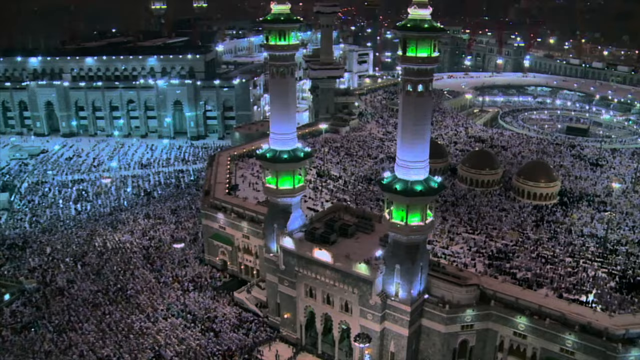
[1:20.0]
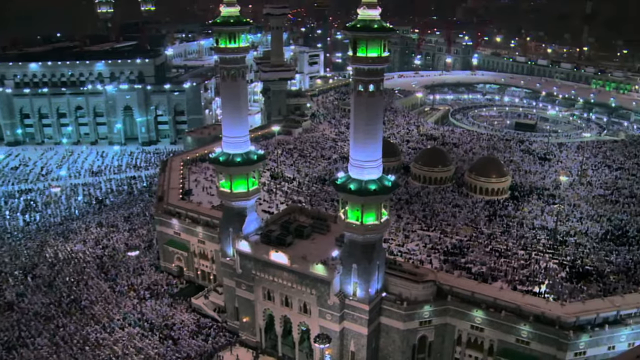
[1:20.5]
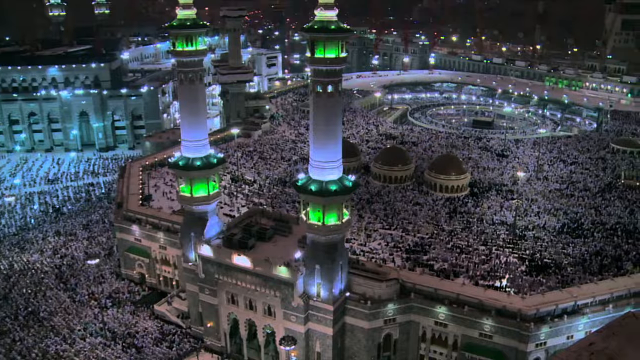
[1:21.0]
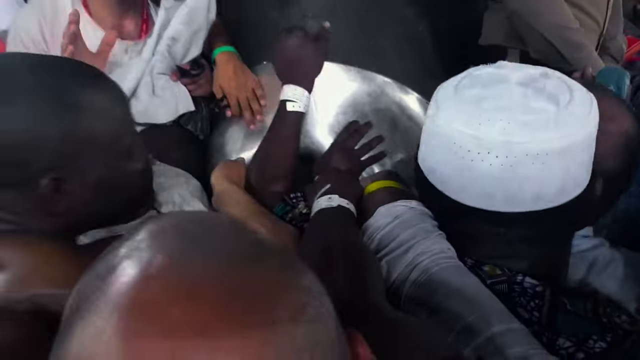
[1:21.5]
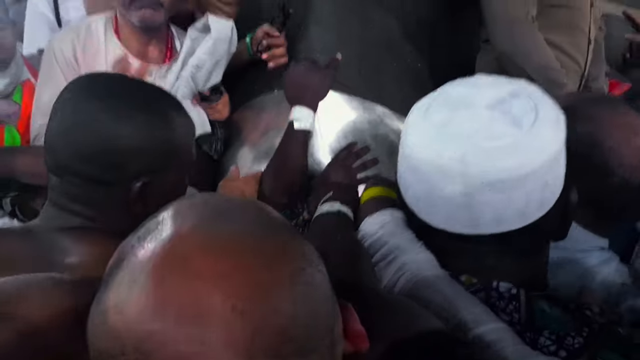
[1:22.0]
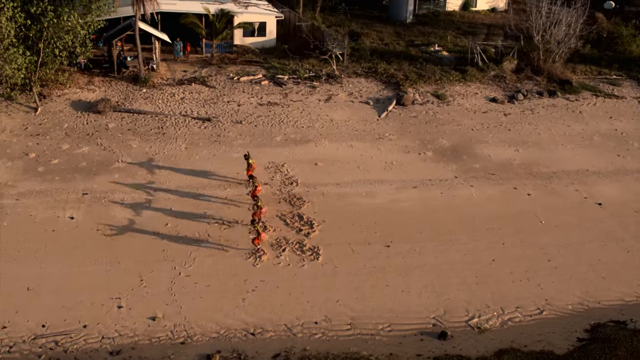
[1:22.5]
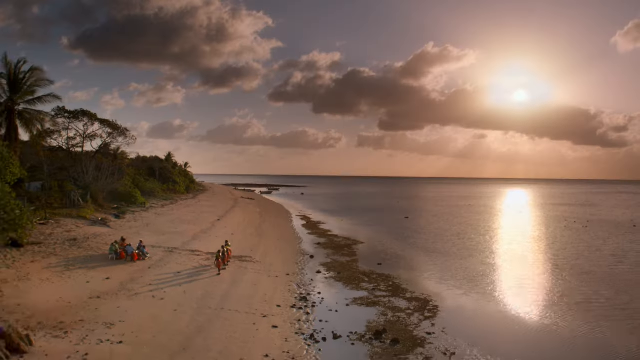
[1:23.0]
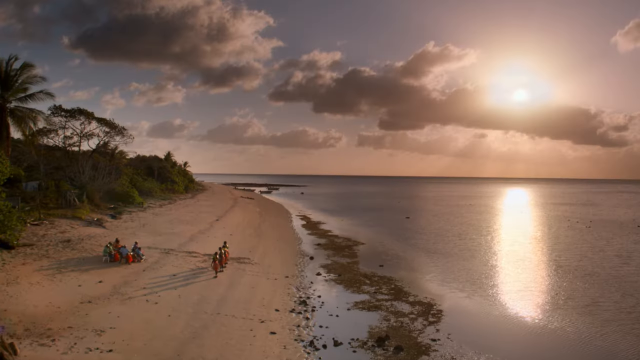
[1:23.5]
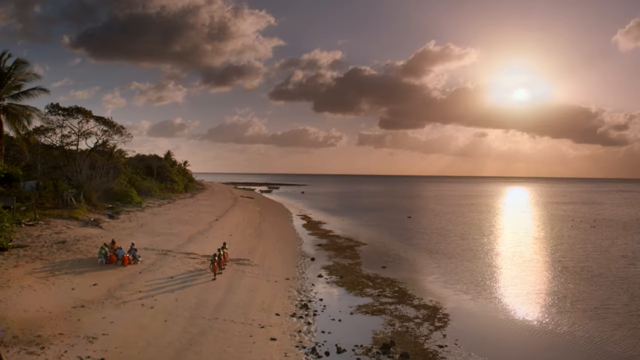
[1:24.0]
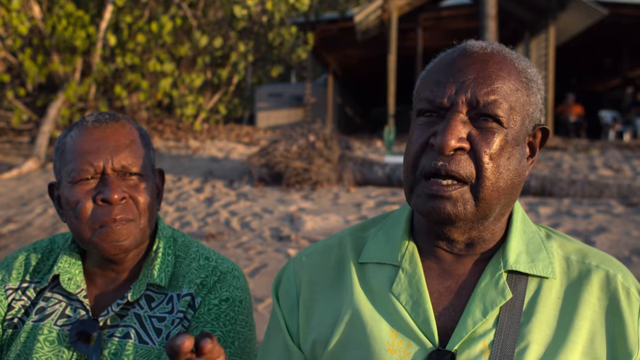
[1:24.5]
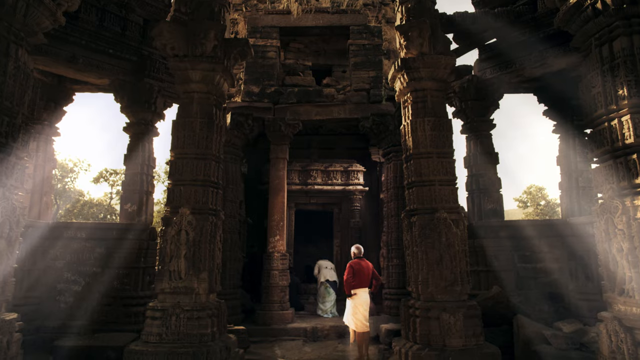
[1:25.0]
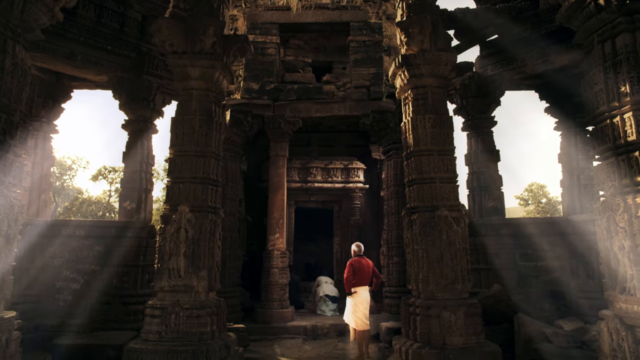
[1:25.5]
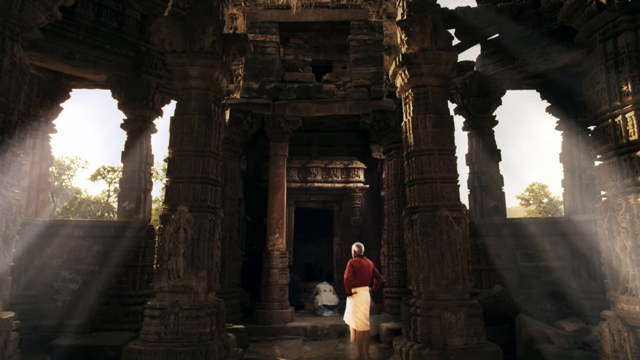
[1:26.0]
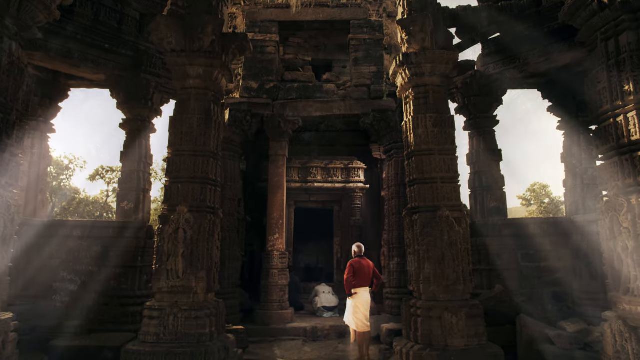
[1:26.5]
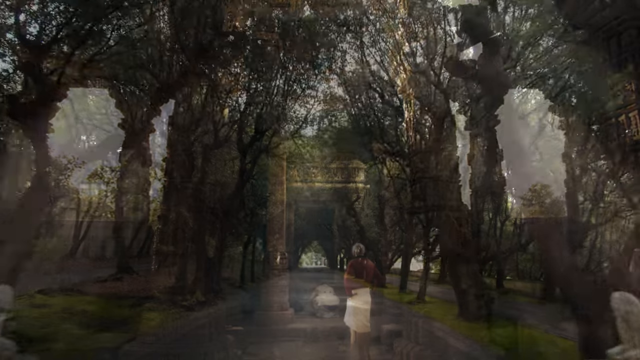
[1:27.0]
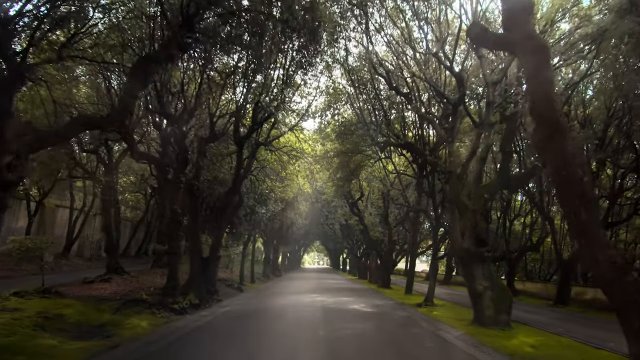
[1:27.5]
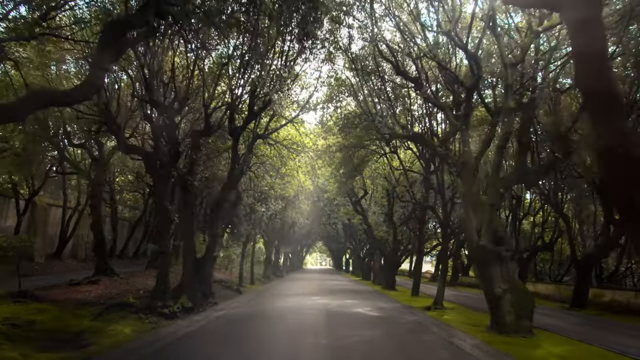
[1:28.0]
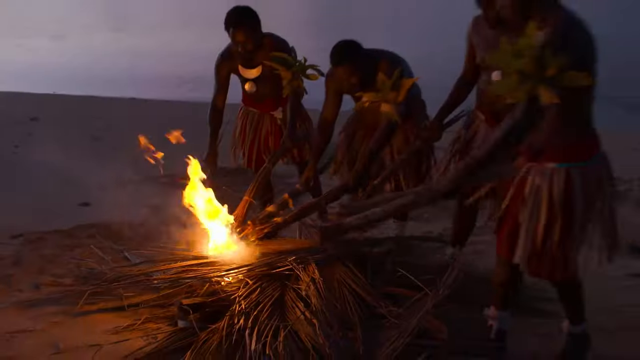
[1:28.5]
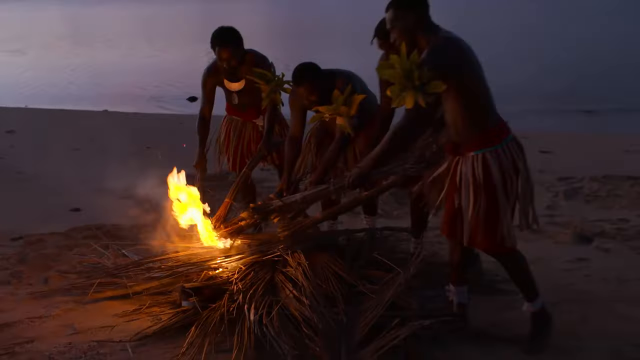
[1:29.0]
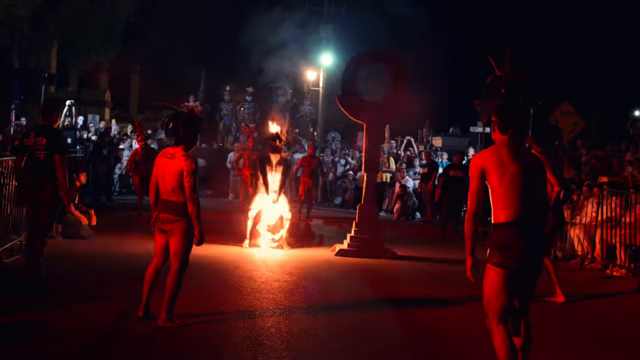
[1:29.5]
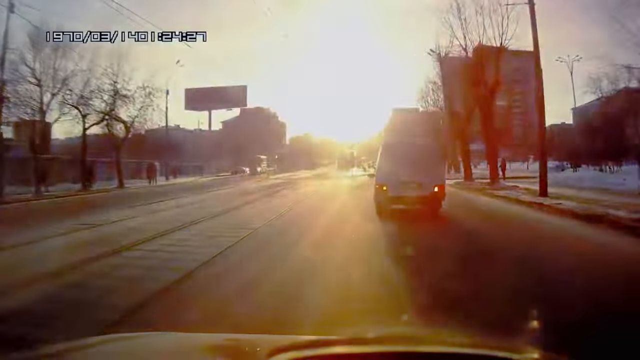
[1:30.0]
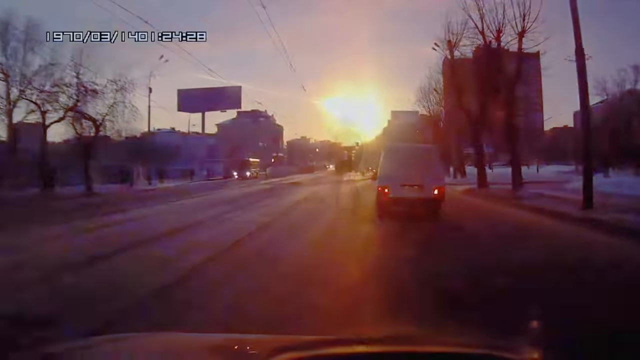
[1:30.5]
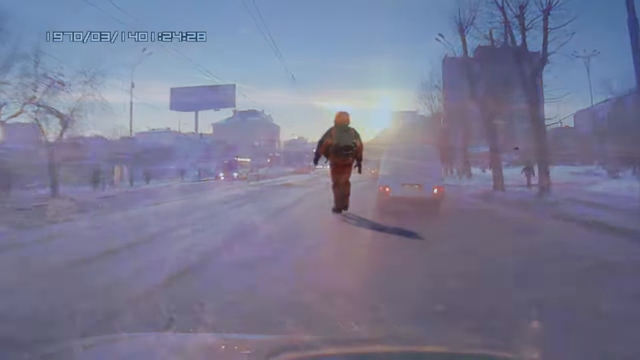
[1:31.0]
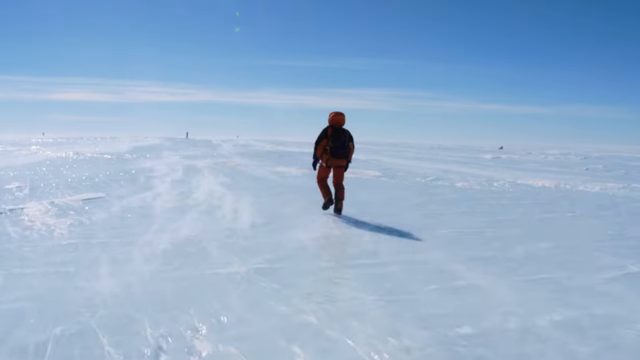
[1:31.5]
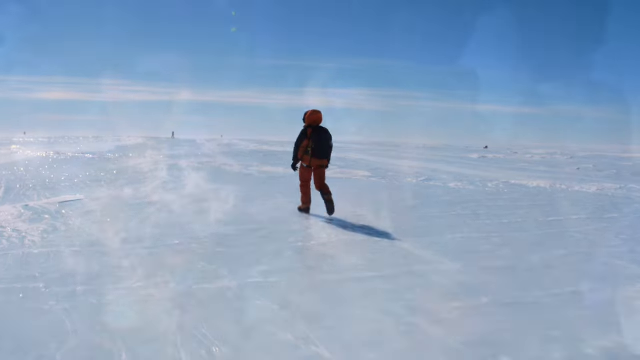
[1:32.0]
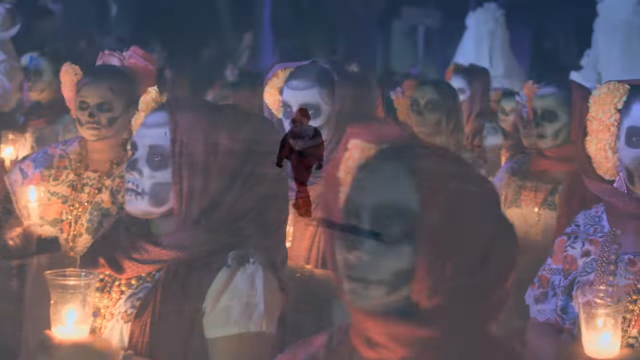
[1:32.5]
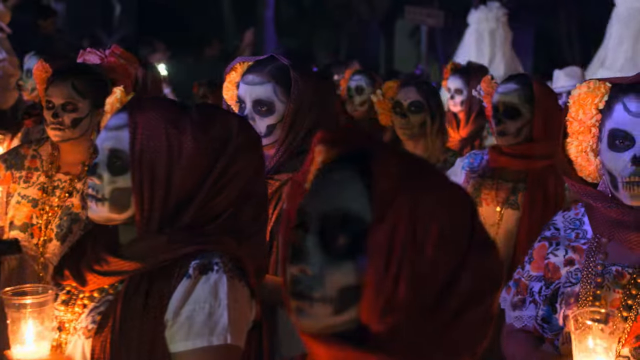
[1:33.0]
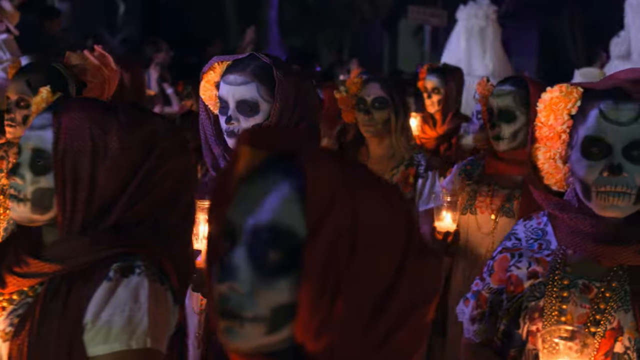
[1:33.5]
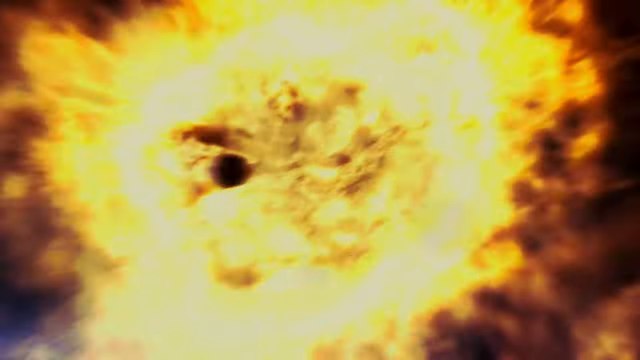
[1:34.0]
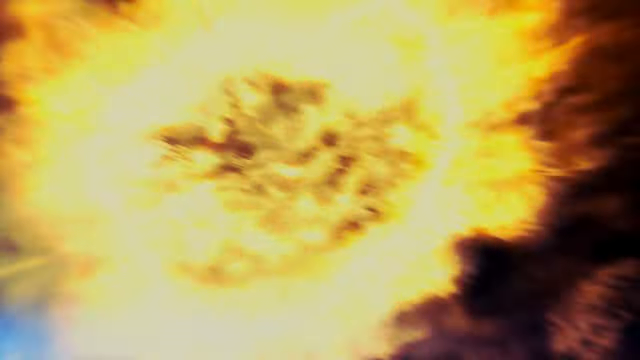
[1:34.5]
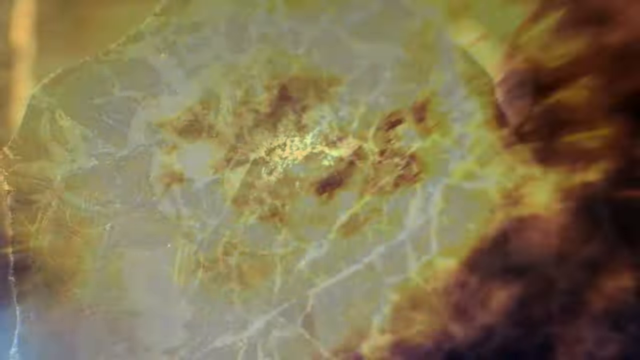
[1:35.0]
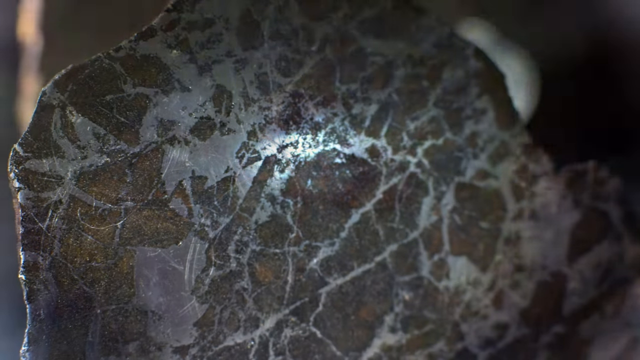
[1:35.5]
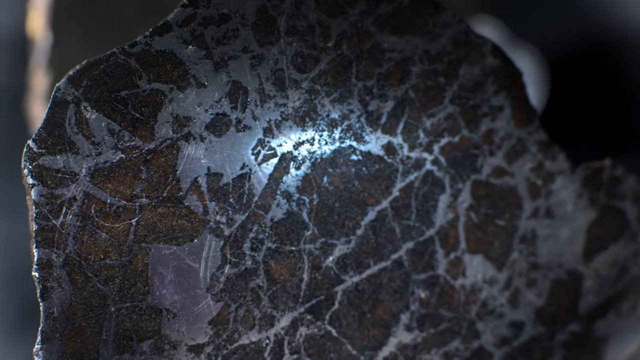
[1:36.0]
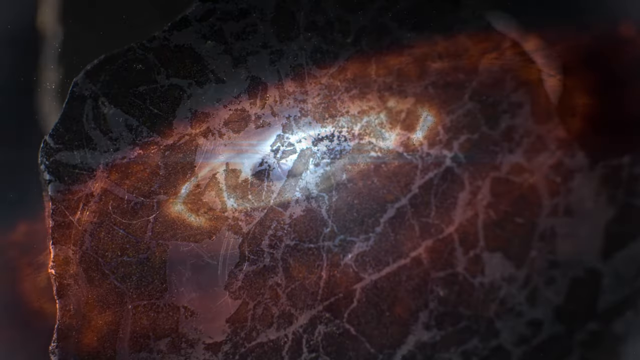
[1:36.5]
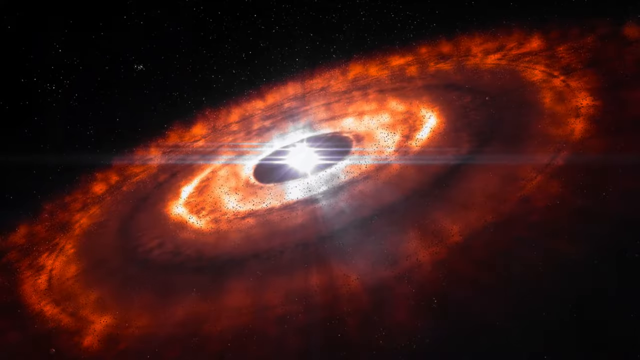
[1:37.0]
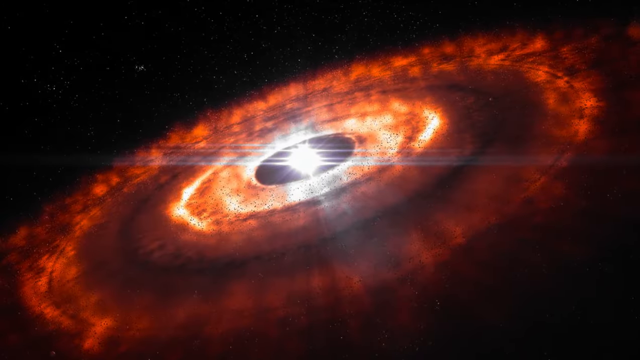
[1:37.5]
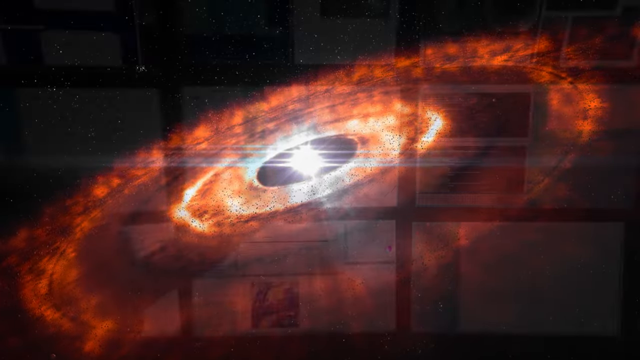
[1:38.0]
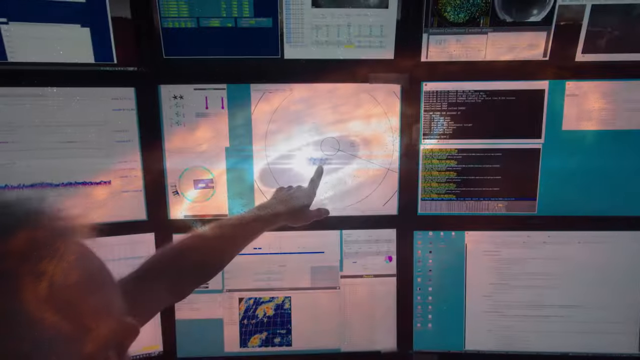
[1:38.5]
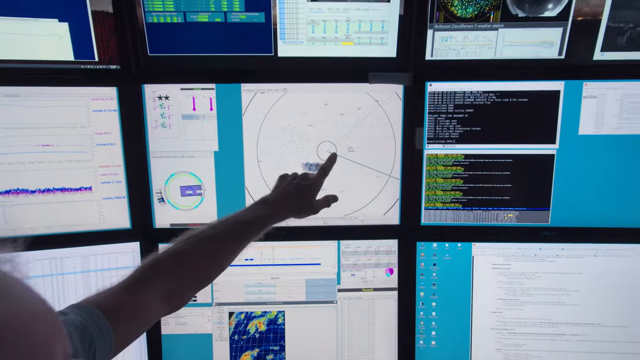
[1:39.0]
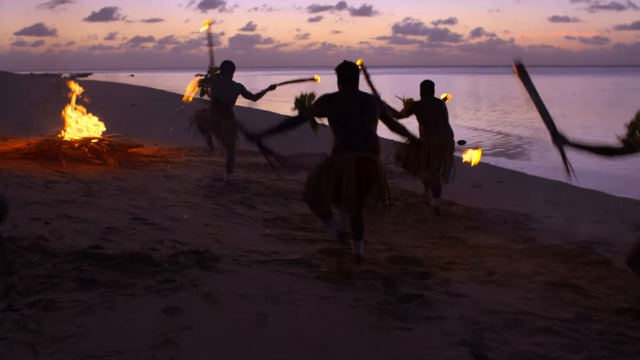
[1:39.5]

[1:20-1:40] A Hindu man wearing a yellow dress prays, performing religious rites. People dance near a flame. In the next scene a Roman priest wearing very funny glasses talks with a gentleman in a suit in a furnished room with a wooden ceiling.